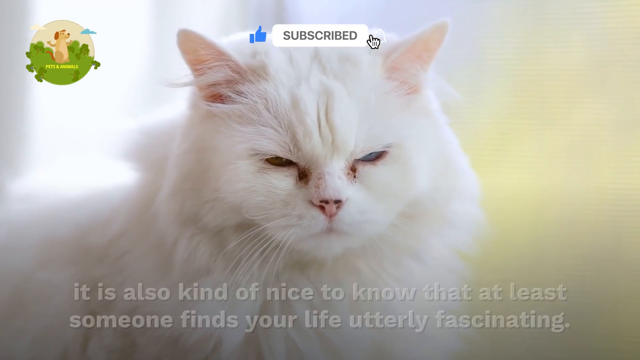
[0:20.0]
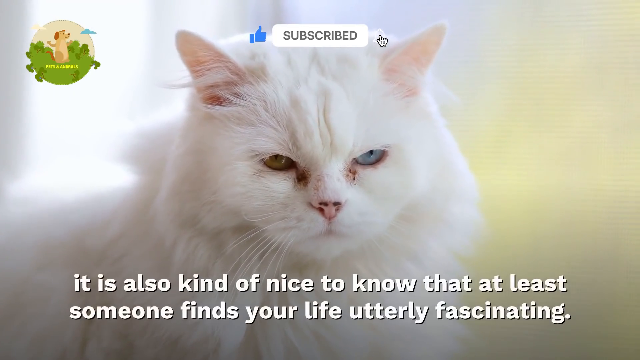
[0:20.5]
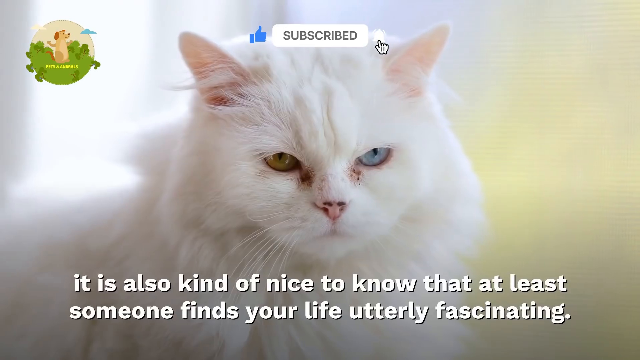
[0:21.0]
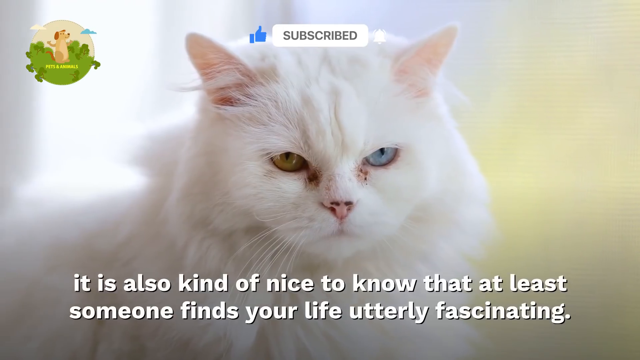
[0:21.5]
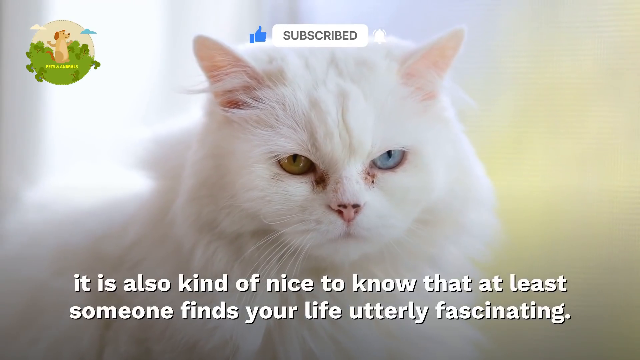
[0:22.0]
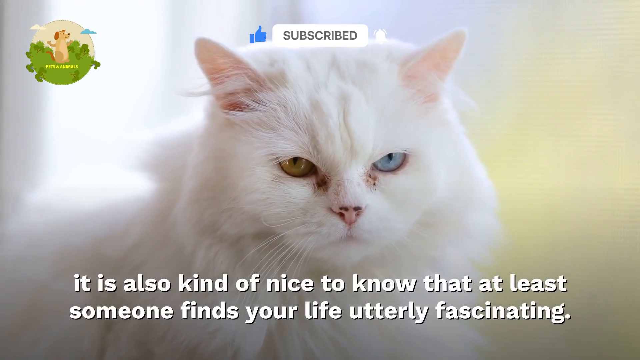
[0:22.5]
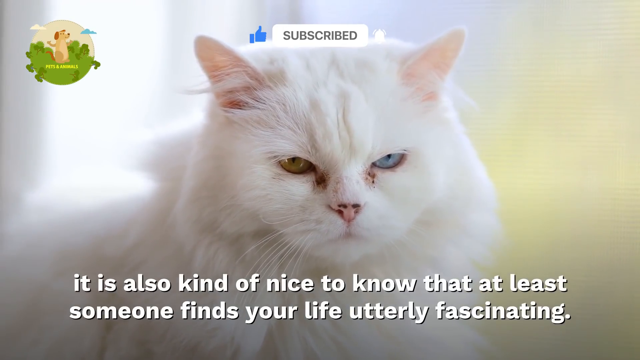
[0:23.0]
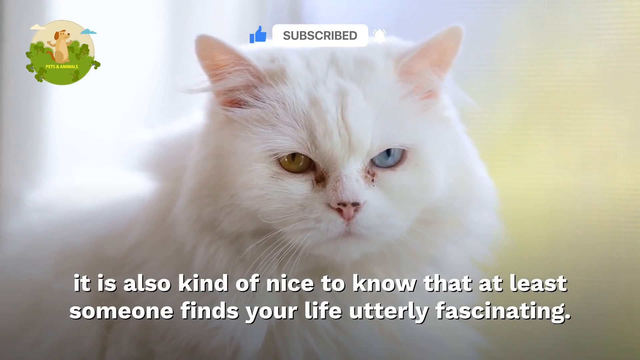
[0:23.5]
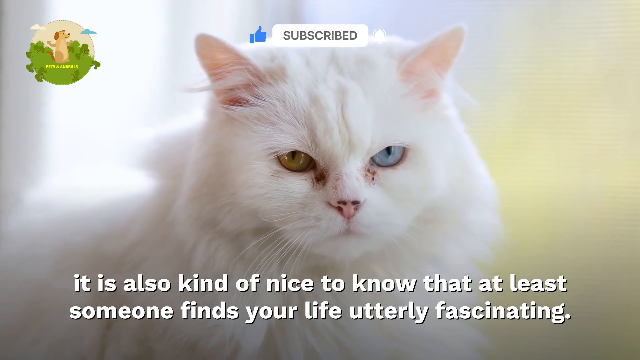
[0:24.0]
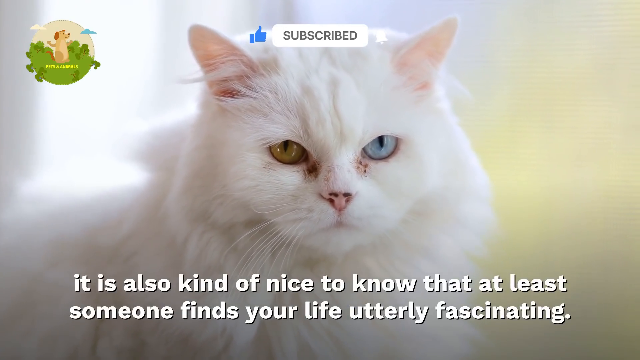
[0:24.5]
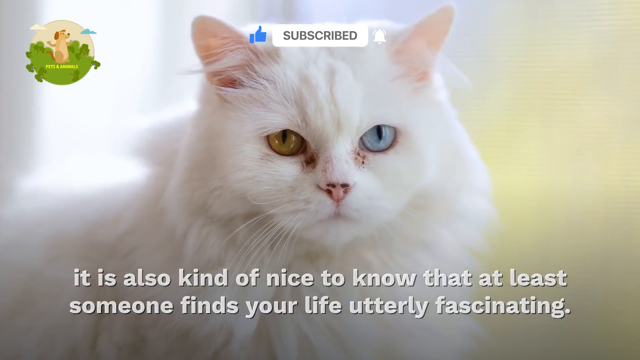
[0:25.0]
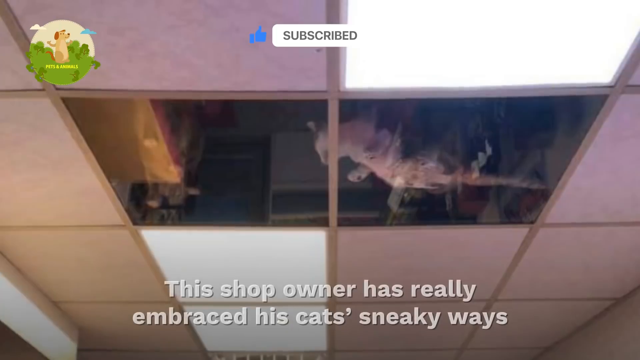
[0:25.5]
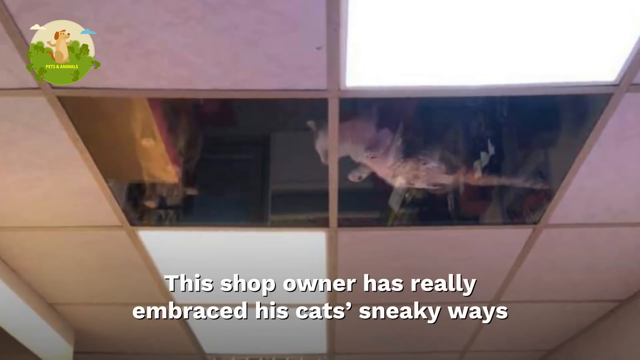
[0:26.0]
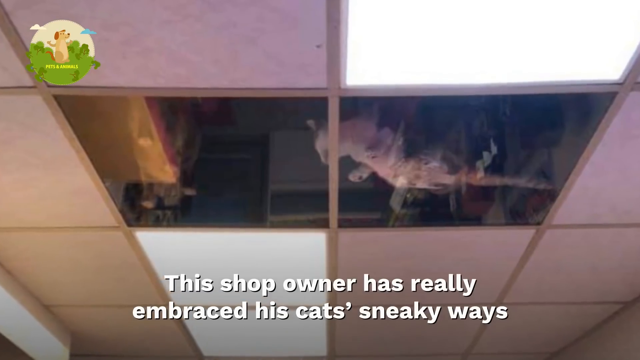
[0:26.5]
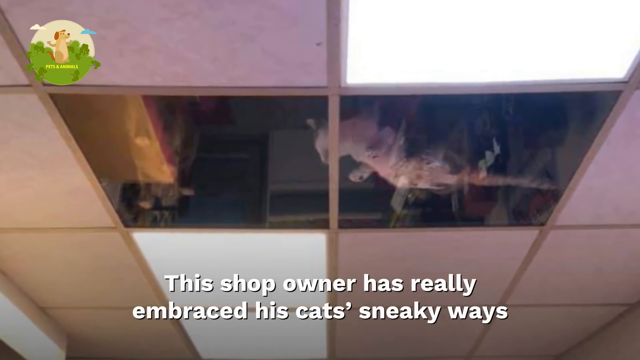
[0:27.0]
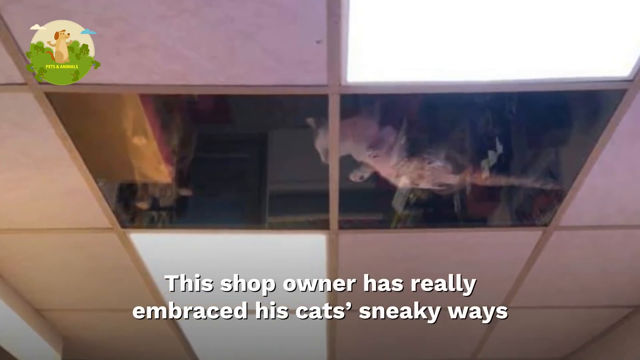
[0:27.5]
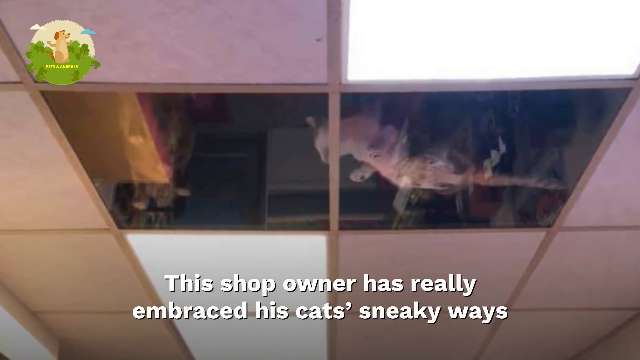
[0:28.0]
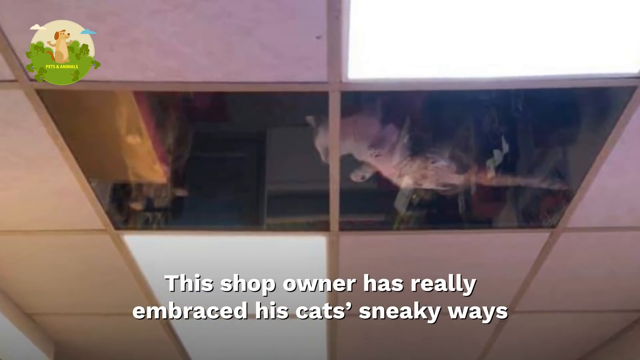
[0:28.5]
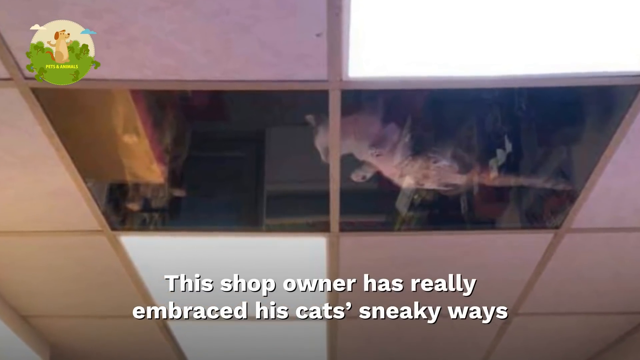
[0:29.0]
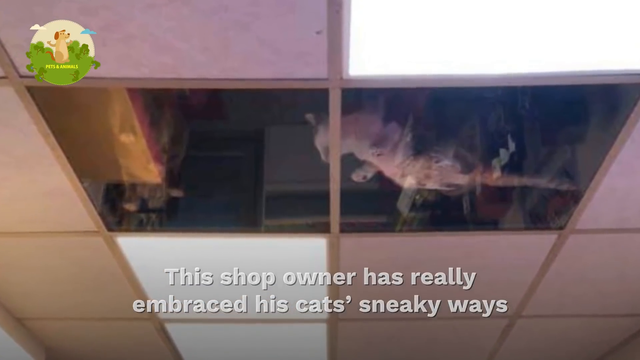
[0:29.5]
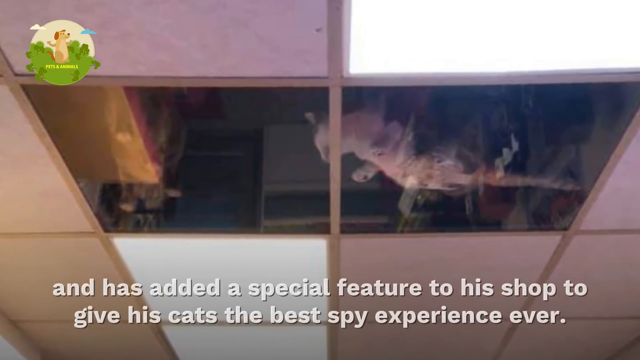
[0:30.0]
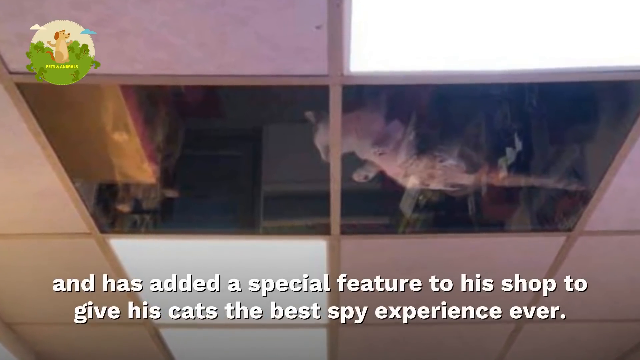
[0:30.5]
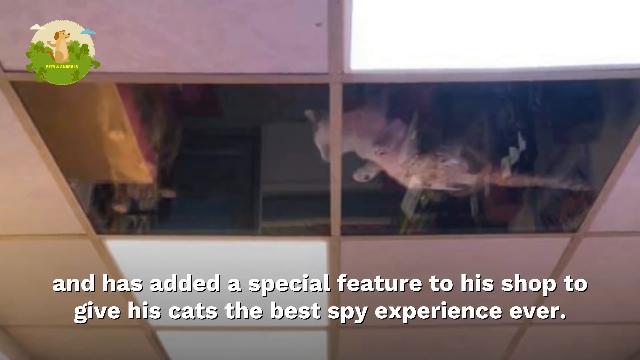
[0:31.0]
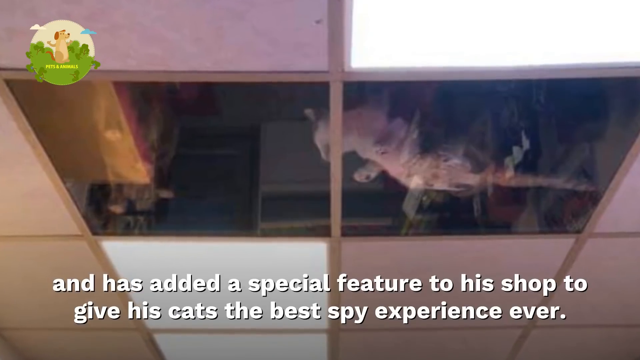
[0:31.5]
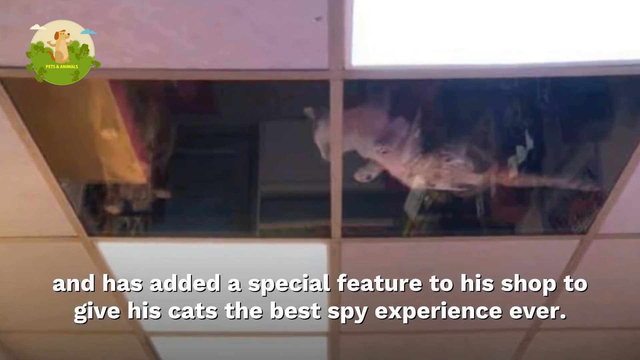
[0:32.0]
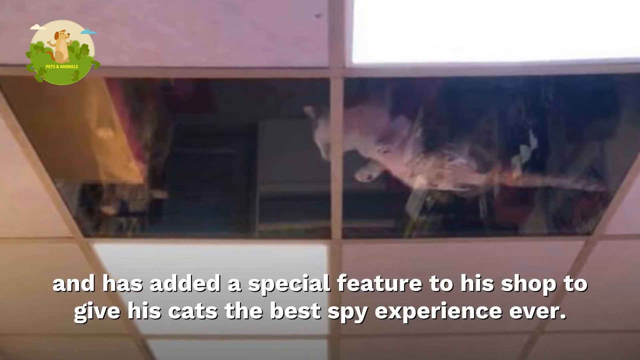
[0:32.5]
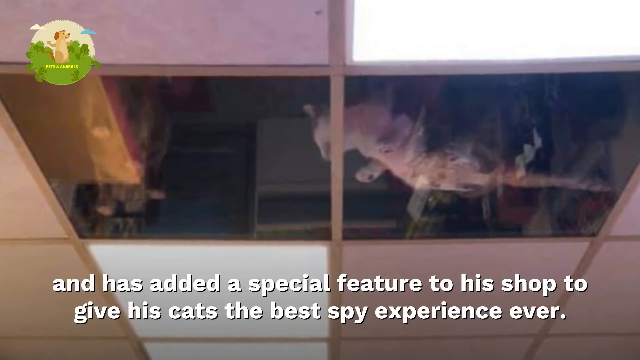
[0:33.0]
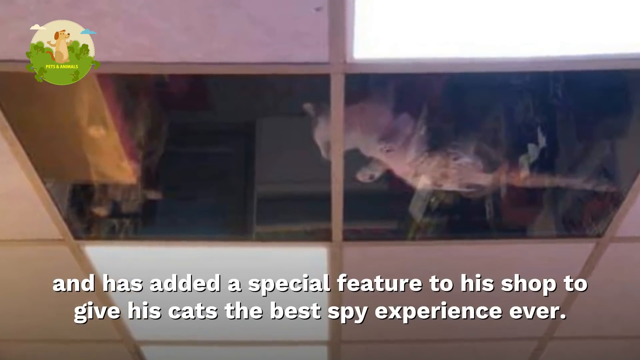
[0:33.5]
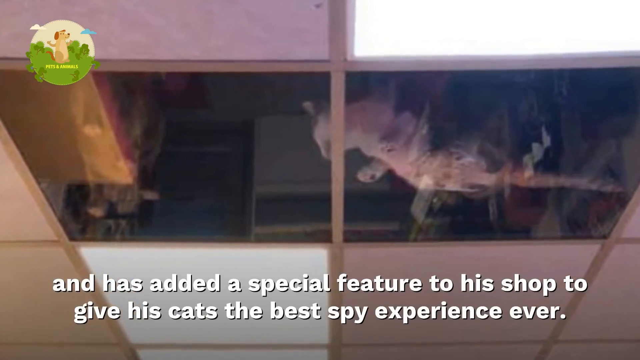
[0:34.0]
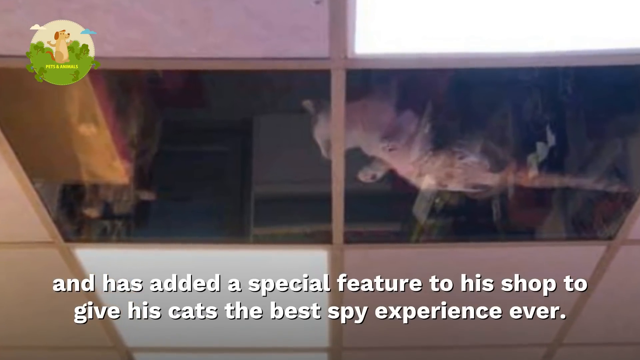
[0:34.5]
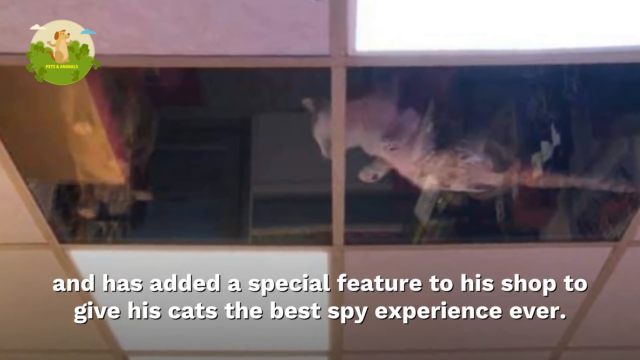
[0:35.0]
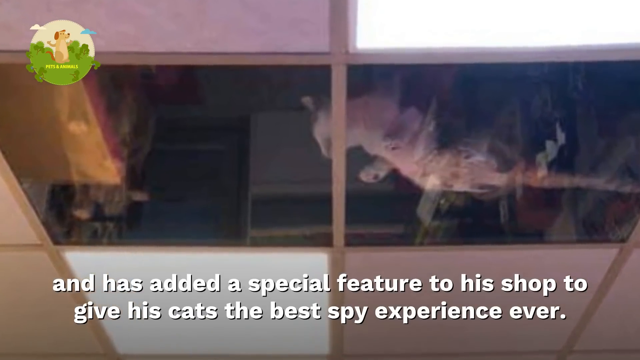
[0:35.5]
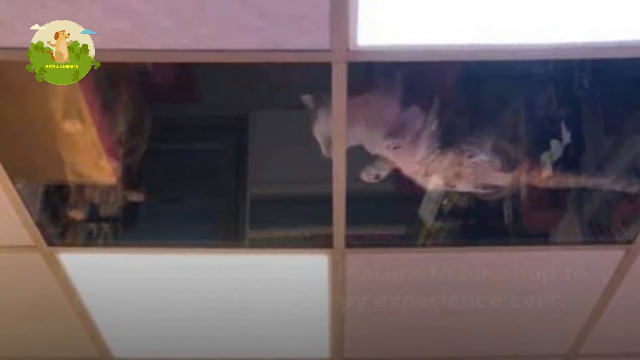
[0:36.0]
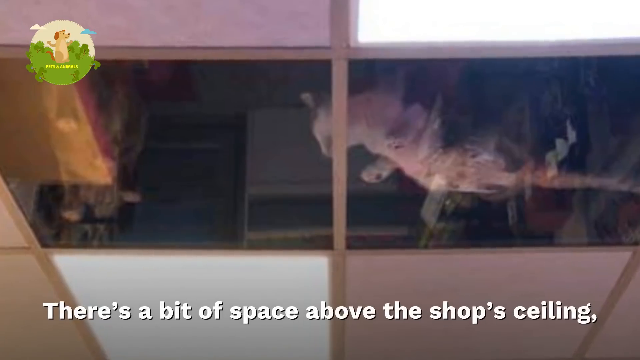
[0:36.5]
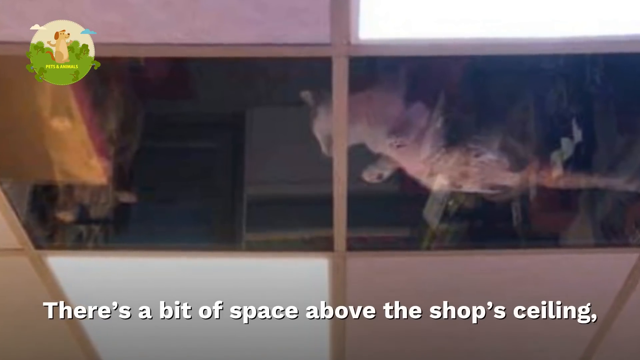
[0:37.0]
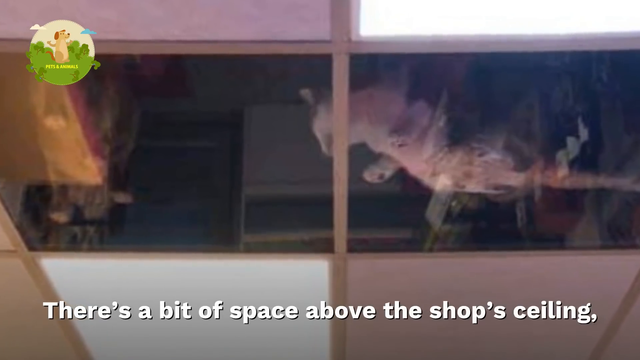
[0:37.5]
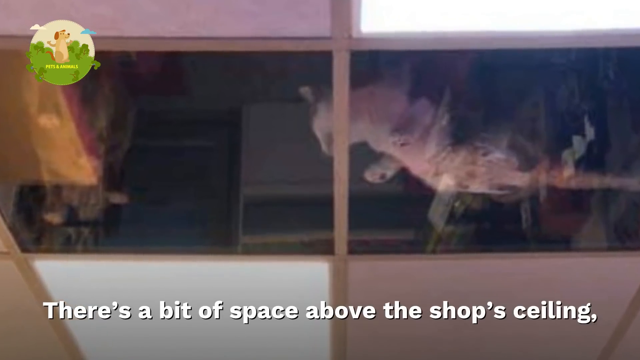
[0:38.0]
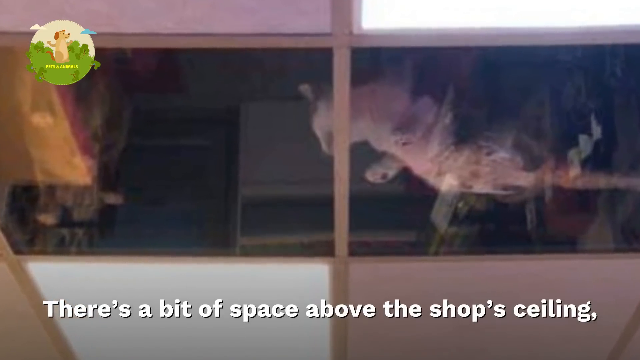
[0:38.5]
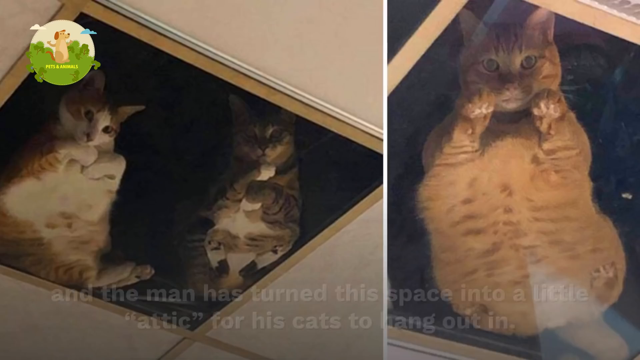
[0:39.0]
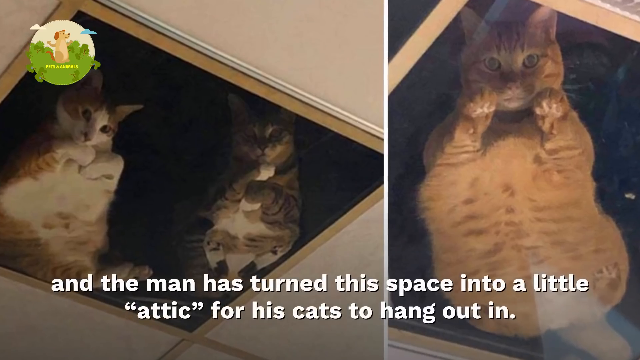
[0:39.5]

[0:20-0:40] A white cat has kind of goop in its eye areas, and its eyes are kind of halfway shut. It has one yellow eye and one blue eye. The words at the bottom read "it is also kind of nice to know that at least someone finds your life utterly fascinating." Next the text says "this shop owner has really embraced his cats' sneaky ways" and "has added a special feature to a shop to give his cats the best spy experience ever," followed by "there's a bit of space above the shop ceiling and the man has turned this space into a little attic for his cats to hang out in." The cats can look down because the ceiling tiles are kind of glass and see-through, so the cats can look down and people can also look up and see them.